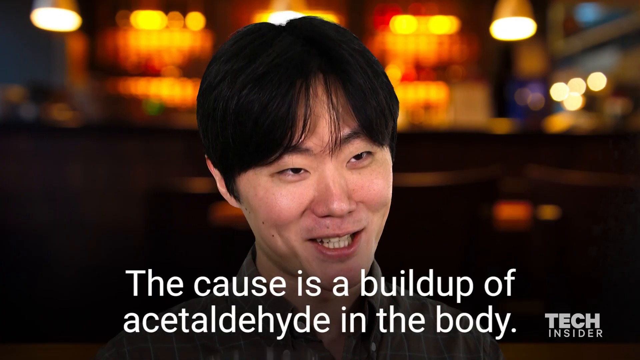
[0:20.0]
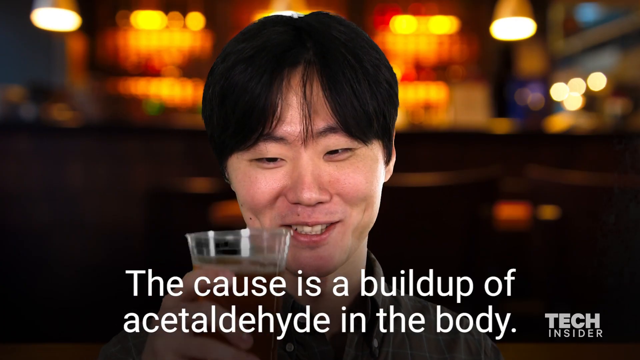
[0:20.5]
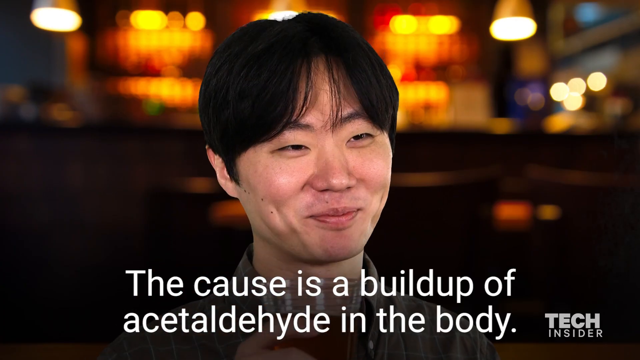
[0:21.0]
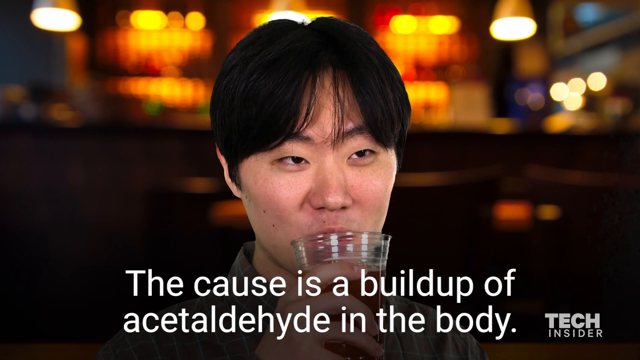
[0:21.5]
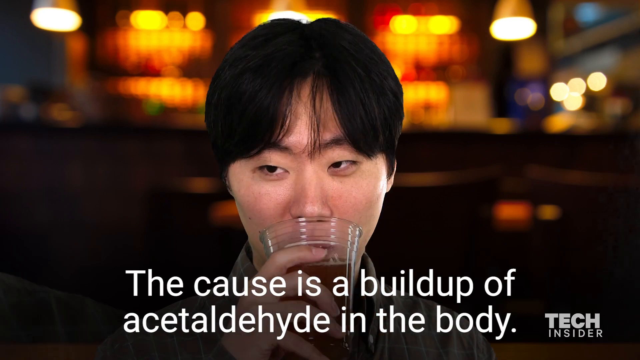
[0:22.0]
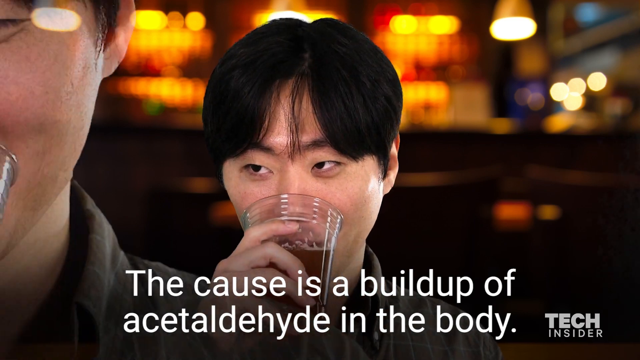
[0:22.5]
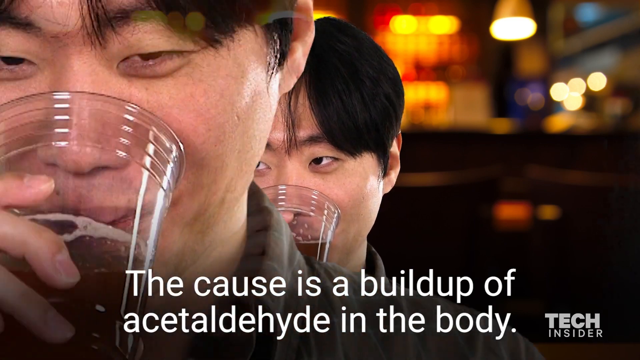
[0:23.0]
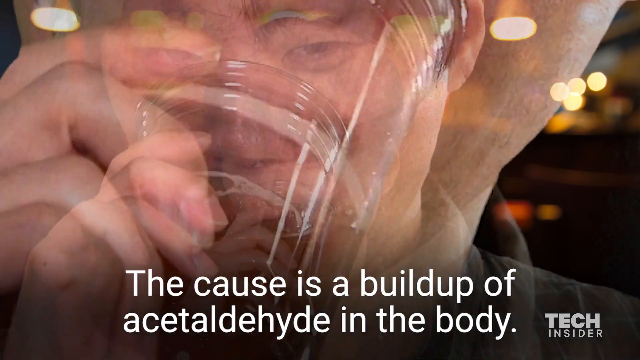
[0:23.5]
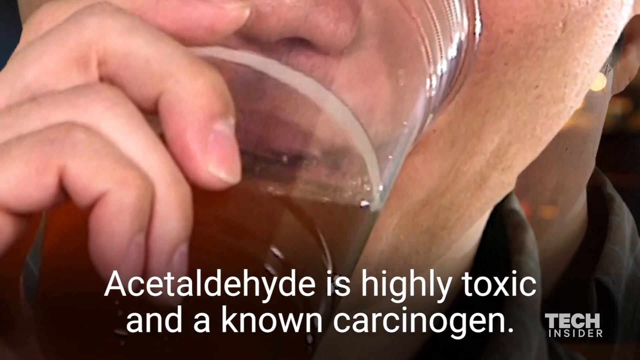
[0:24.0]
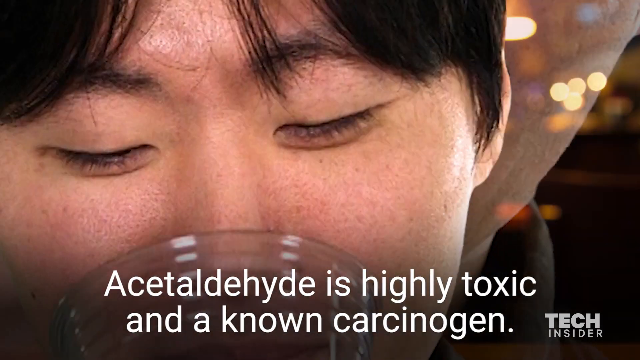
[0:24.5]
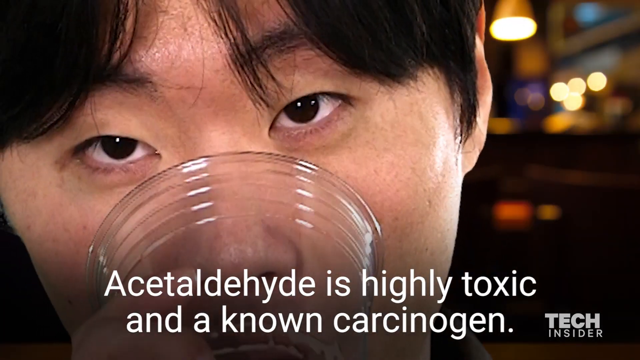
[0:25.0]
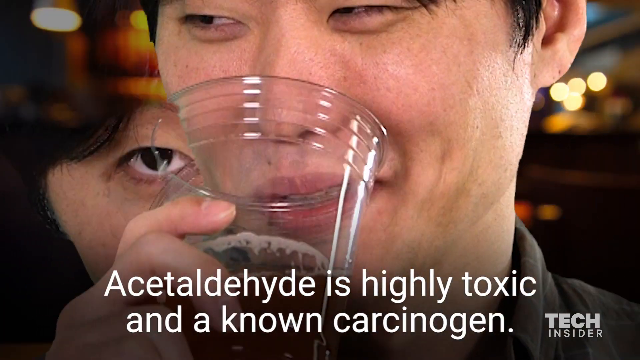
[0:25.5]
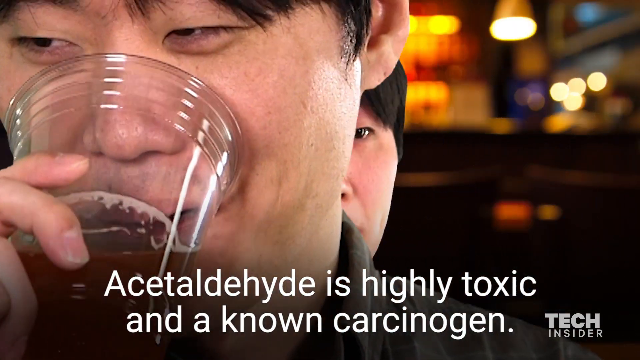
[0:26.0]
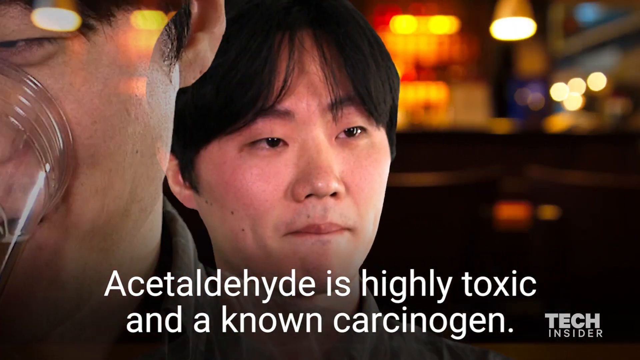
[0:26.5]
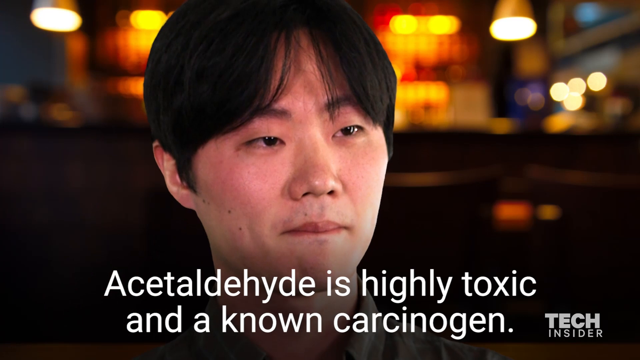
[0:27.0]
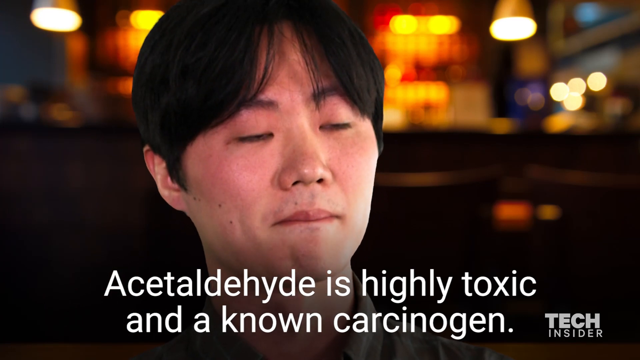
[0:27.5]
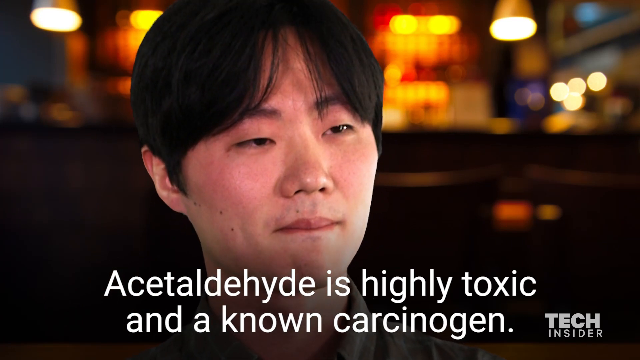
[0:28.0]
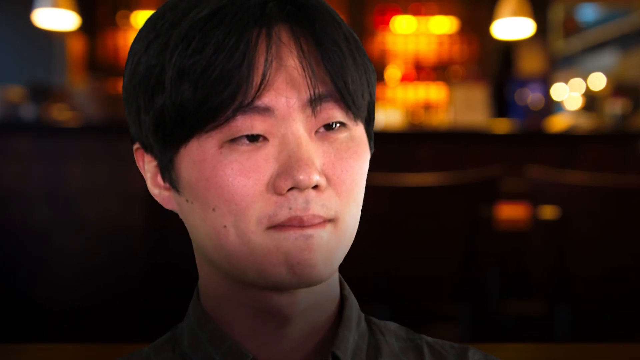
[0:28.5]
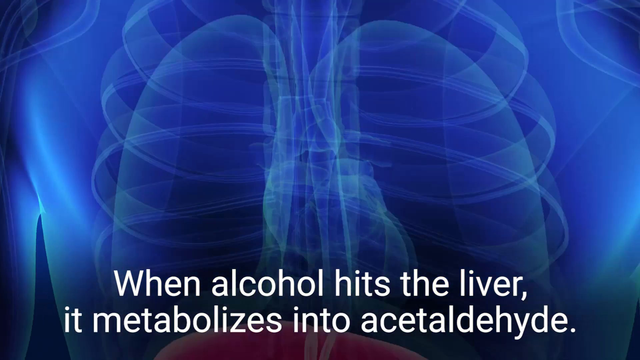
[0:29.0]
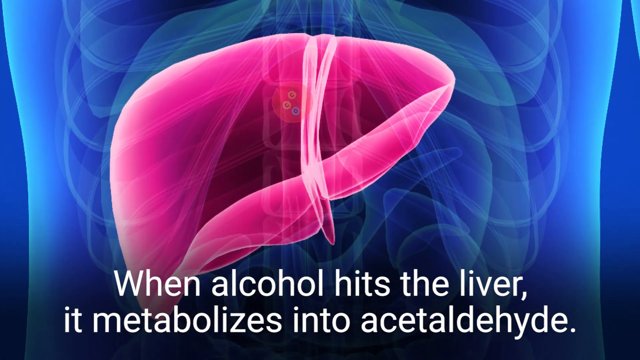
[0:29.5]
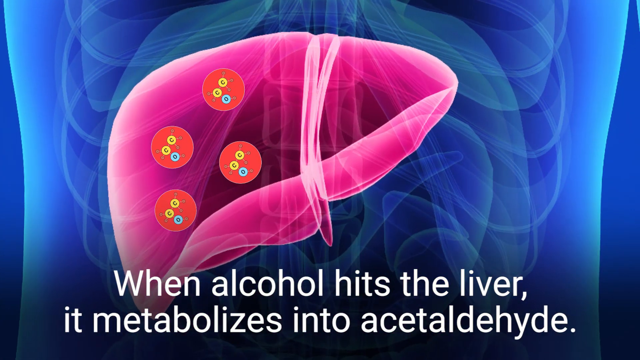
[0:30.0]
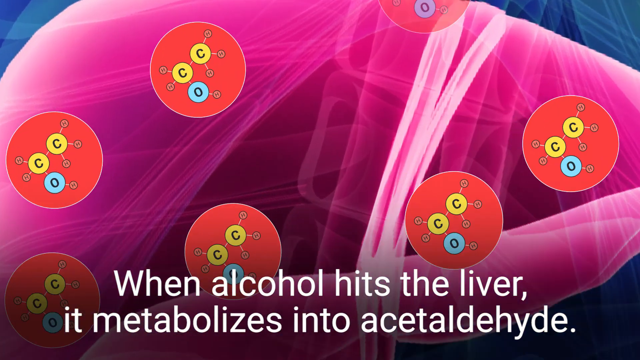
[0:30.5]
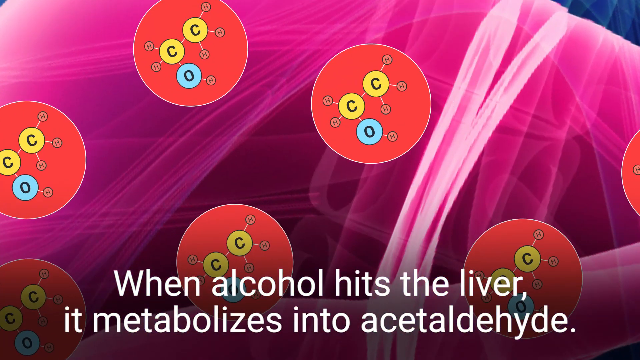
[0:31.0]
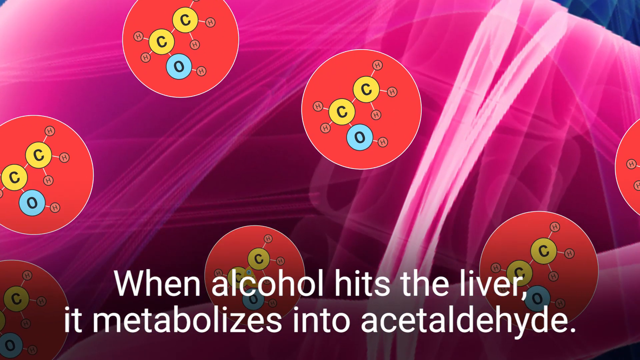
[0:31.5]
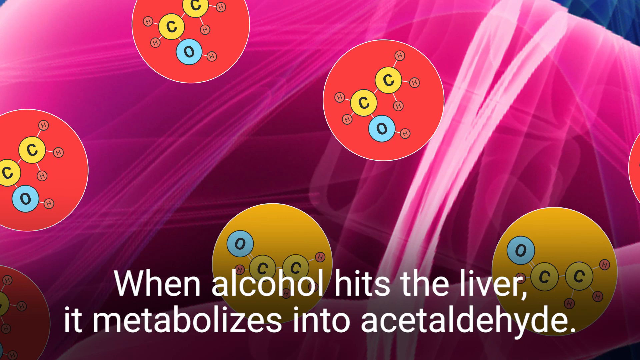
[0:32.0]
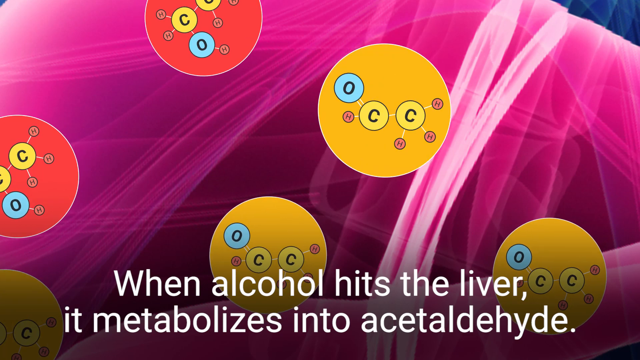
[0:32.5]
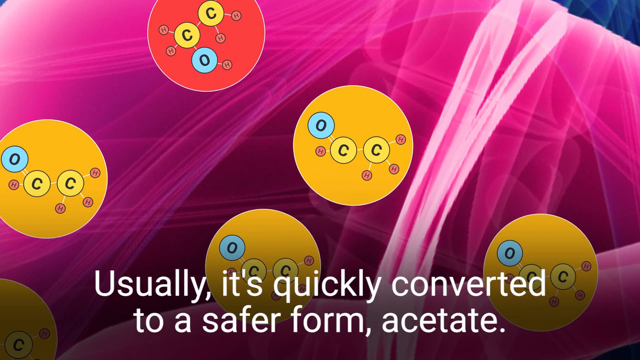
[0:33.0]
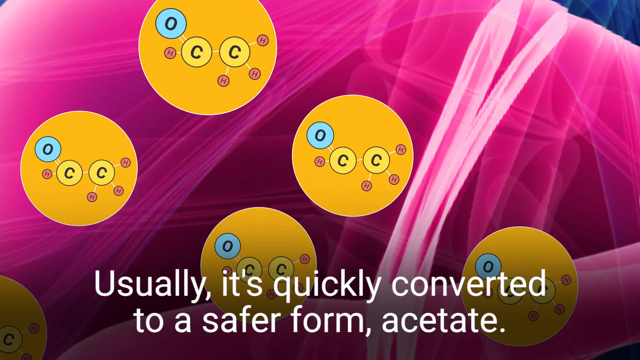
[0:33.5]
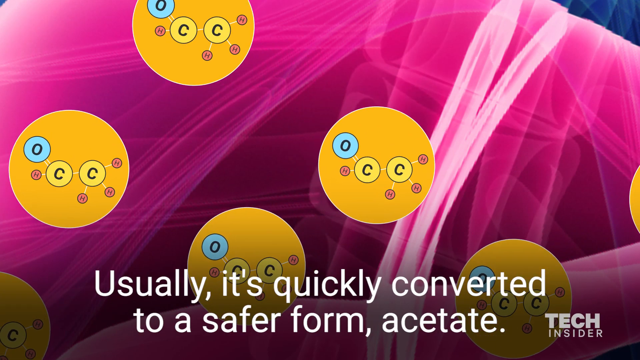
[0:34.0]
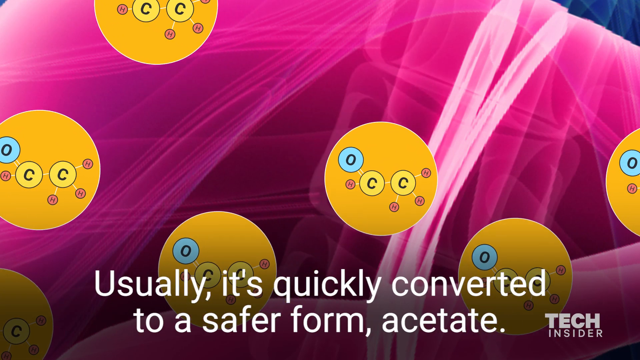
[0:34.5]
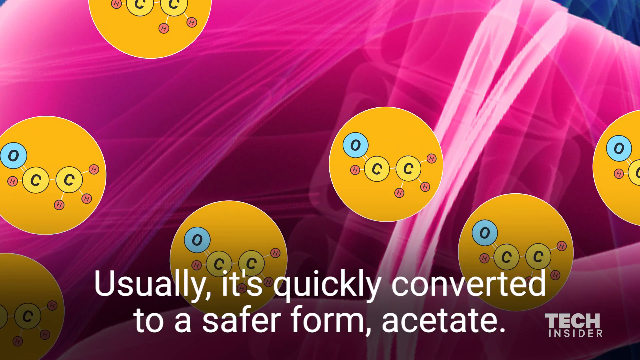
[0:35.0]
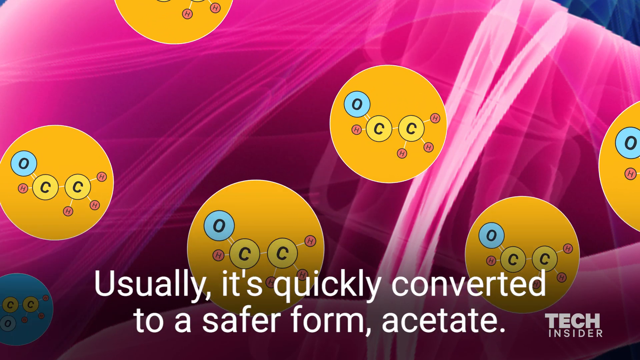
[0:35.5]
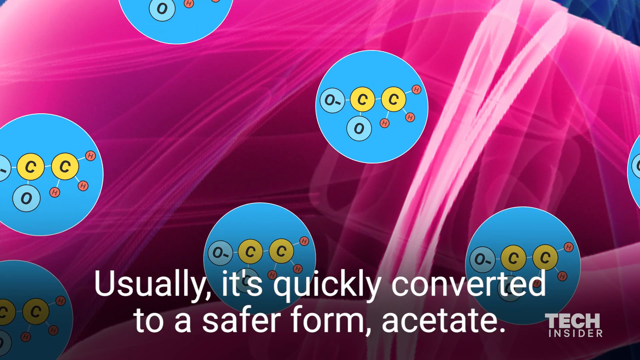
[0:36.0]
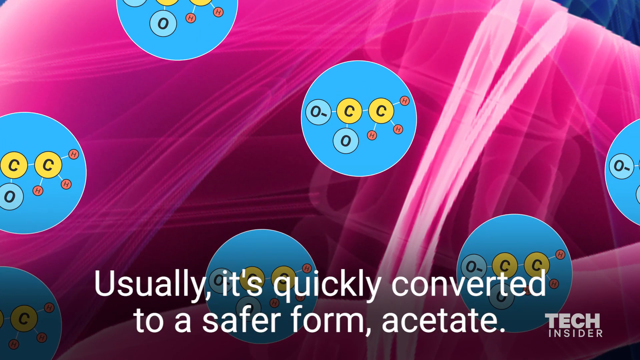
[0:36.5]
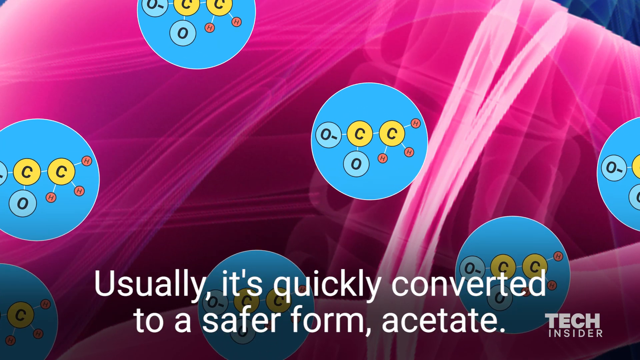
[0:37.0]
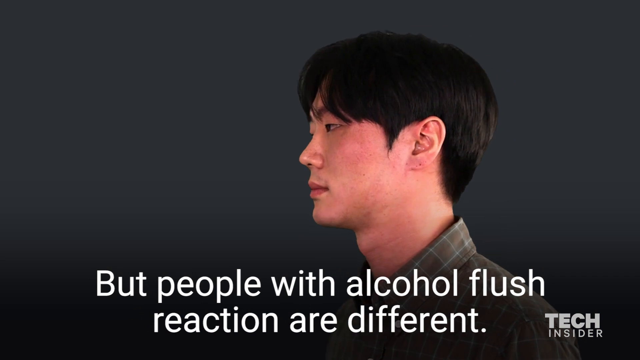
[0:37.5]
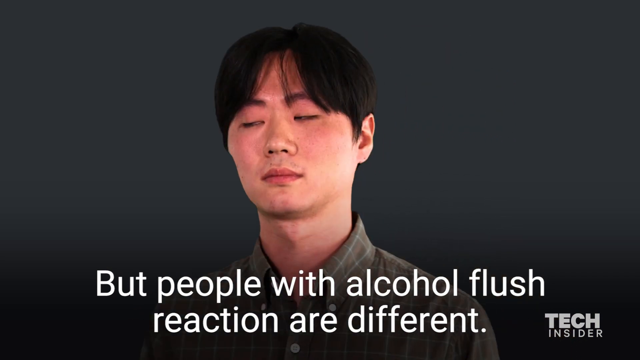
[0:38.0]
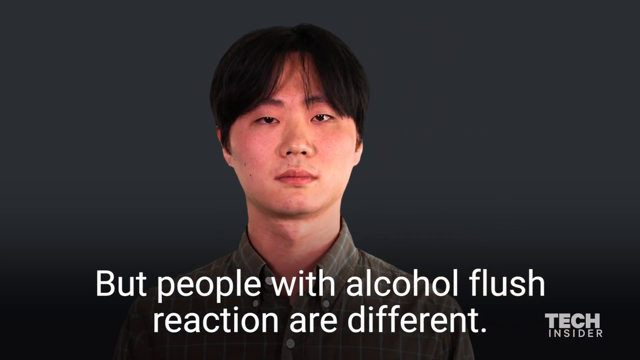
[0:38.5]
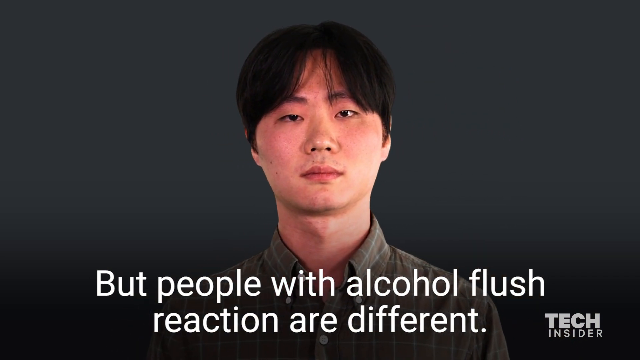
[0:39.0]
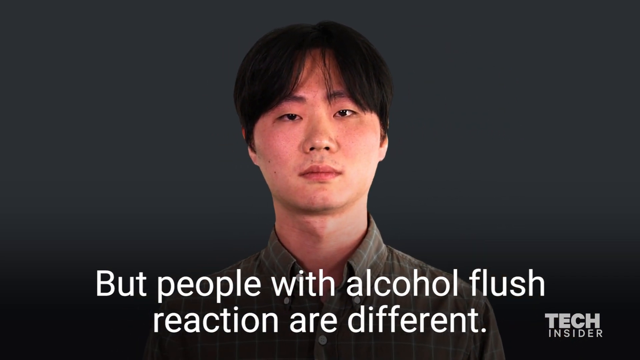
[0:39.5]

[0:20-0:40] A man speaks to either a camera or an interviewer. He is facing the viewer but not looking directly at them. He is an Asian man with short, straight dark hair, and the blurry background behind him looks like a bar or restaurant. As he talks, white text at the bottom of the screen reads "the cause is a build-up of acetaldehyde in the body". He lifts a glass in his right hand as if to say cheers; the glass is three quarters full of a brown liquid that looks similar to beer. As he takes a sip, his image is superimposed with a second and third image of himself drinking from the glass. This happens several times, and then the final image of the man sipping moves to the left, revealing the original footage of him in the bar or restaurant speaking to an interviewer. White text at the bottom reads "acetaldehyde is highly toxic and a known carcinogen". The man nods without speaking. A blue x-ray of the human body appears, and the camera quickly pans down to a bright pink organ, the liver. White text at the bottom reads "when alcohol hits the liver it metabolizes into acetaldehyde". Six red circles appear on the liver, each containing a diagram of two yellow circles with the letter C inside and one blue circle with the letter O or a zero. Another red circle with the same diagram inside also appears. The red circles turn yellow one by one, move around slightly, and then suddenly turn blue. The text at the bottom reads "usually it's quickly converted to a safer form, acetate". The Asian man appears again, standing against a dark grey background; he is in profile at first, facing the left of the screen, and then turns to face the viewer. The text reads "but people with alcohol flush reaction are different".